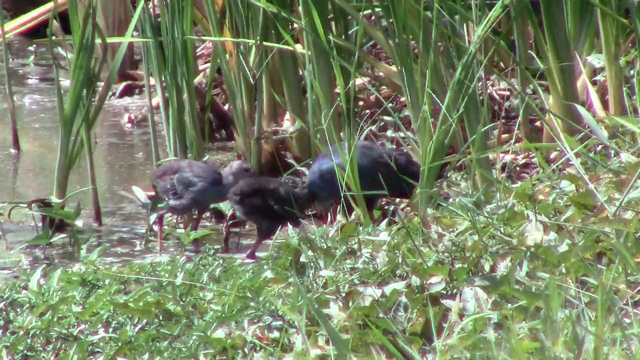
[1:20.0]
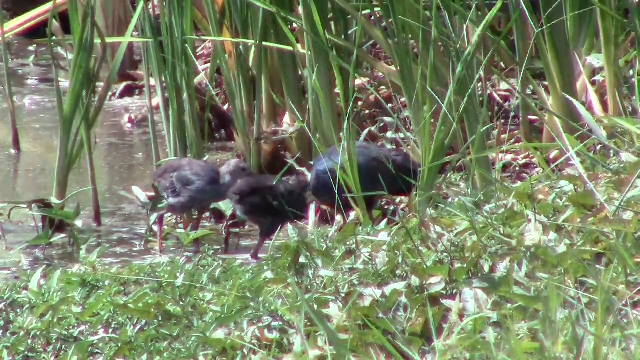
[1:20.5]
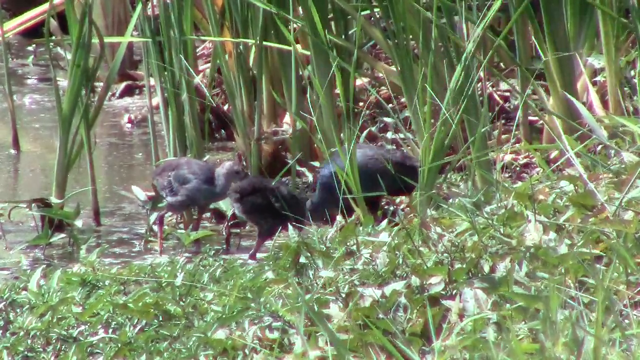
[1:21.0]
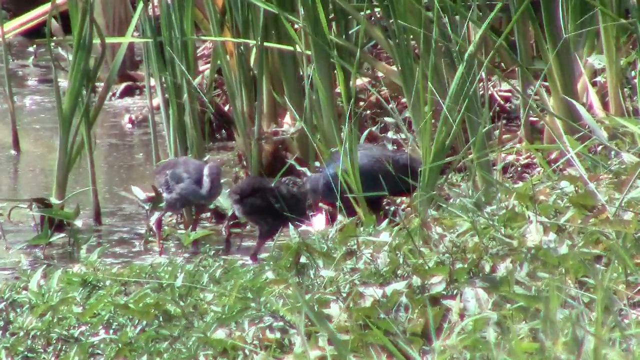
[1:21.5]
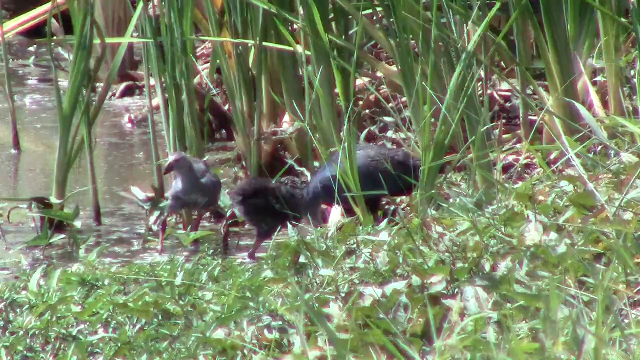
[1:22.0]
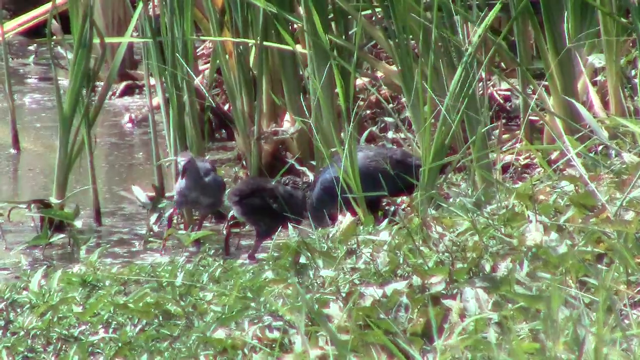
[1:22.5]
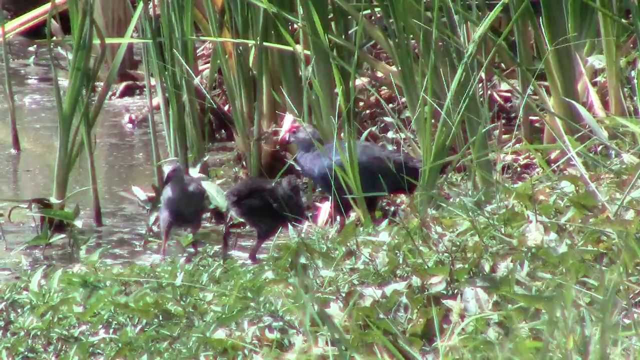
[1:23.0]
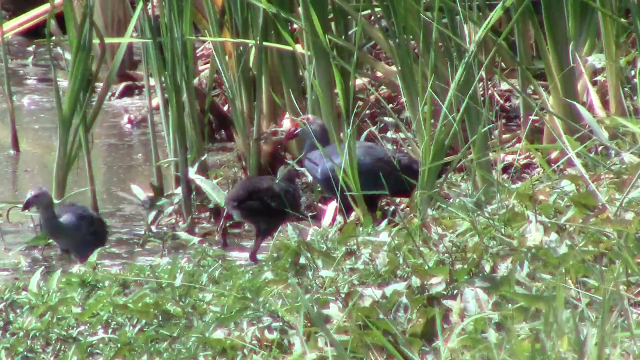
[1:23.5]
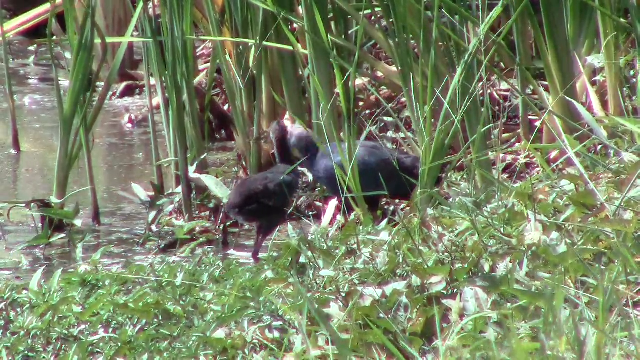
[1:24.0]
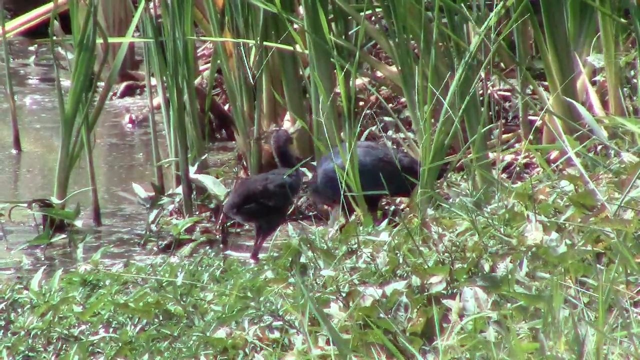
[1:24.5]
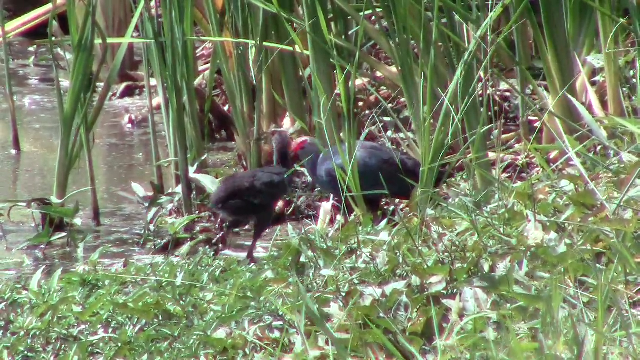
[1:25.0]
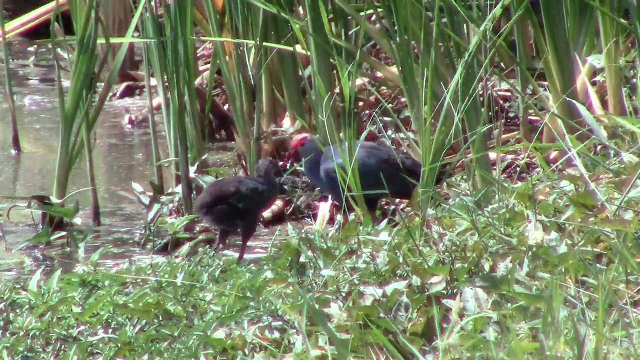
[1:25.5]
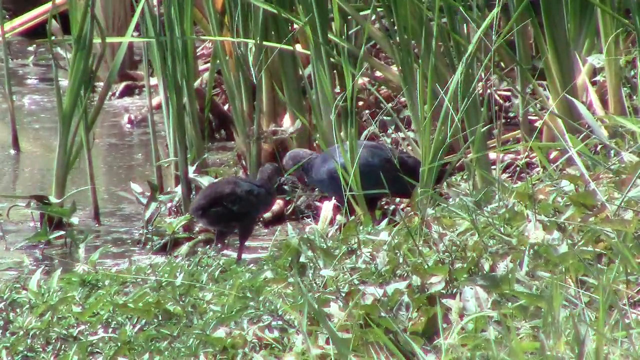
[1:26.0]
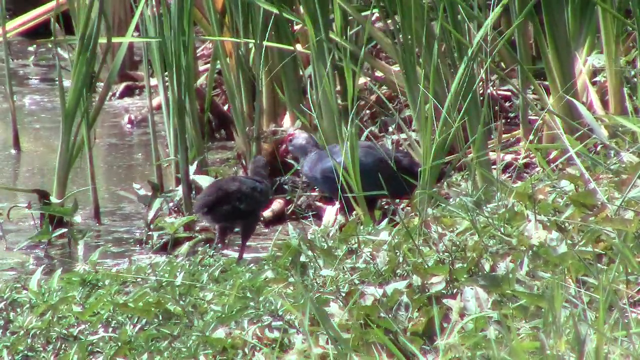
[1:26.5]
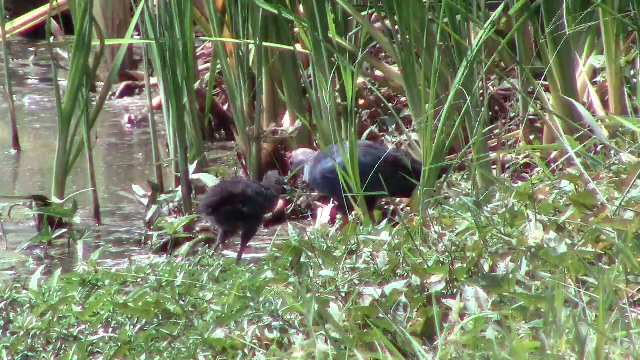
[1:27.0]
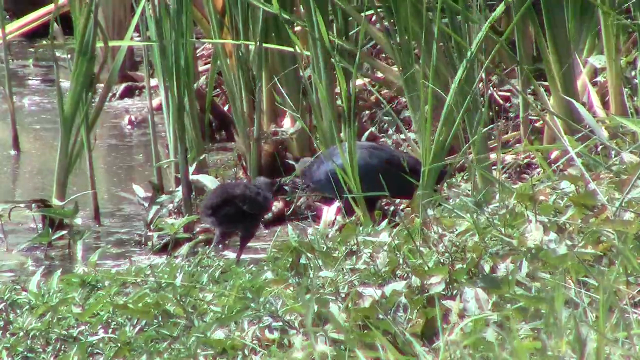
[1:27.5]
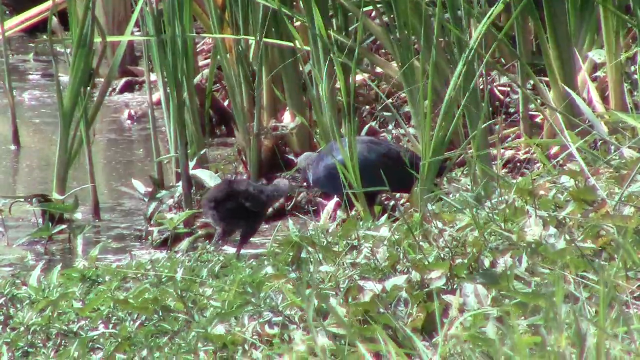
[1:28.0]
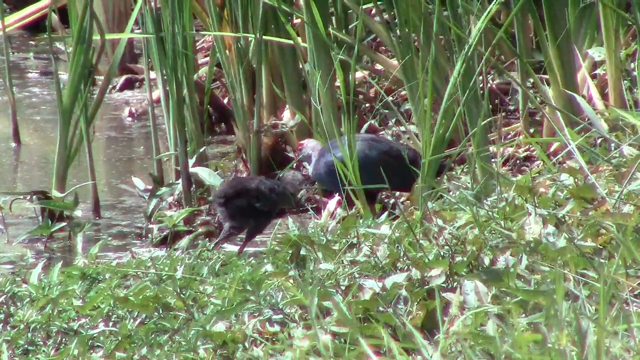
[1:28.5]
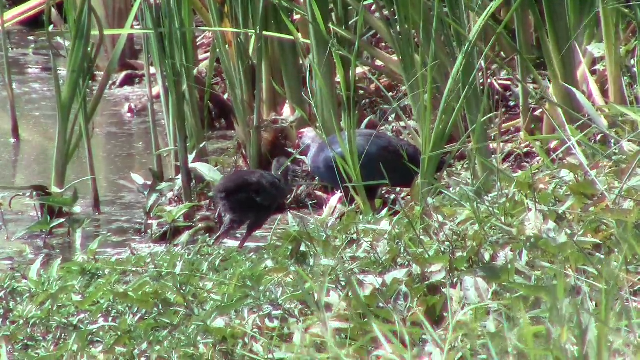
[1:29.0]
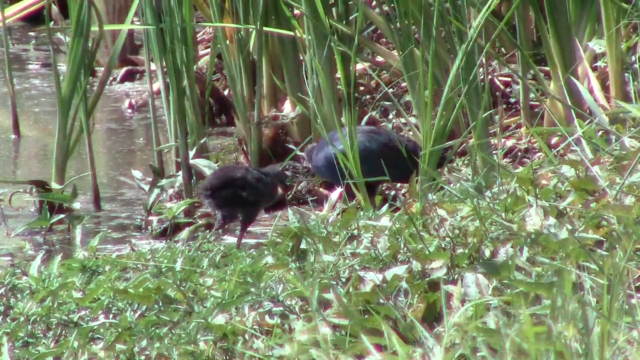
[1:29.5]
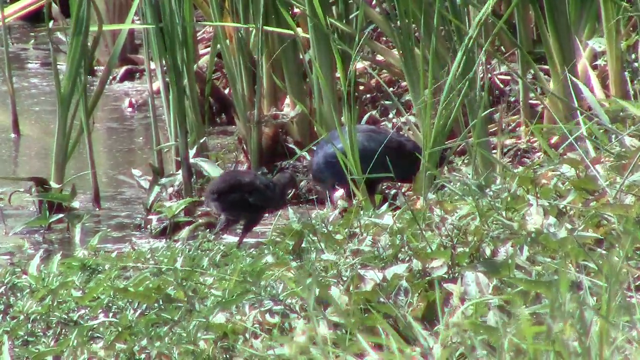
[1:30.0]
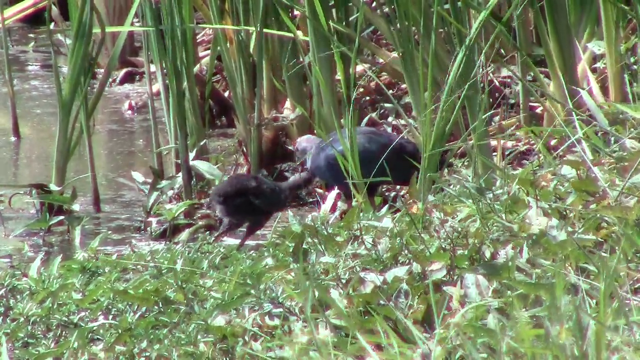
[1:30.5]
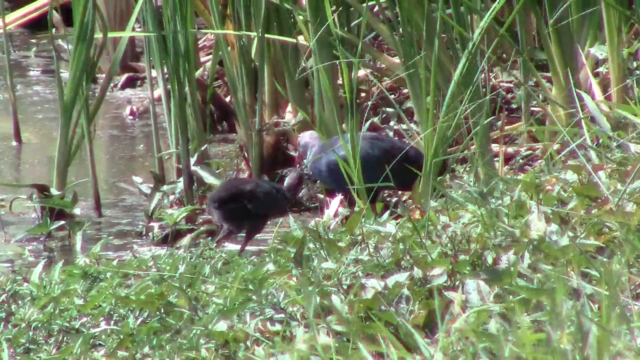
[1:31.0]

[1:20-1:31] The birds maybe seem to be fighting, though it is unclear; it looks less like arguing than before. Their beaks open and close quickly, so they appear to be chirping at each other. The bird that found the food is letting the smaller one eat a little bit.